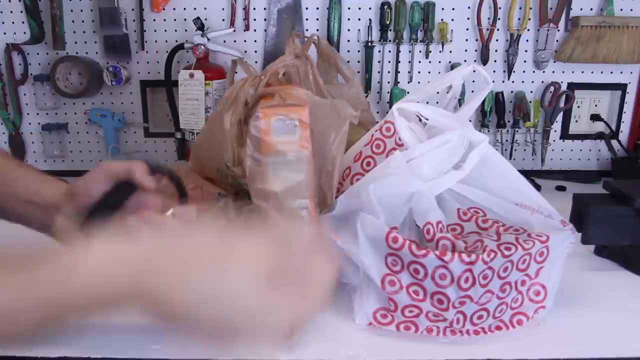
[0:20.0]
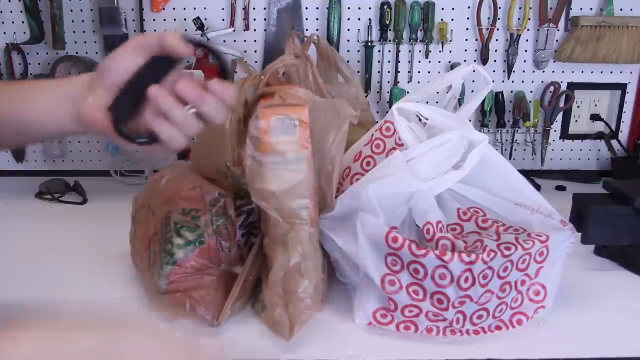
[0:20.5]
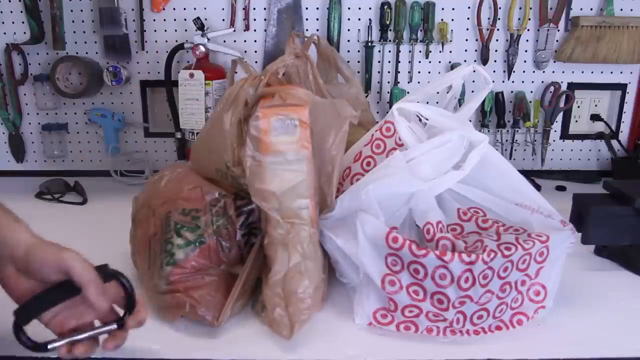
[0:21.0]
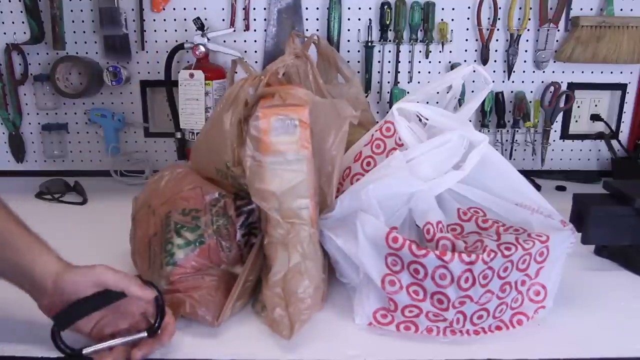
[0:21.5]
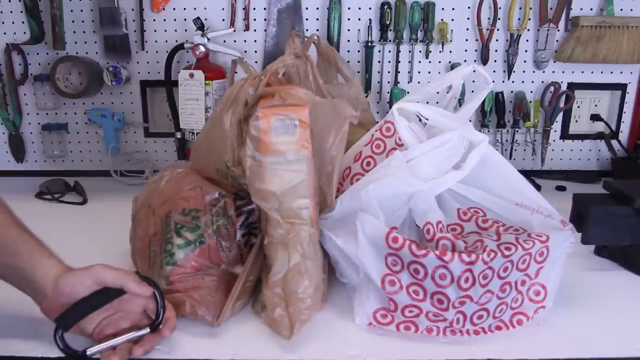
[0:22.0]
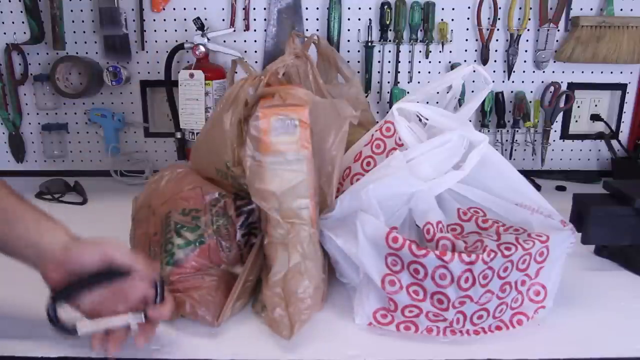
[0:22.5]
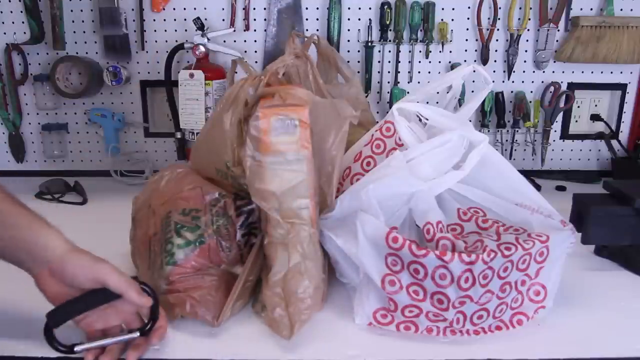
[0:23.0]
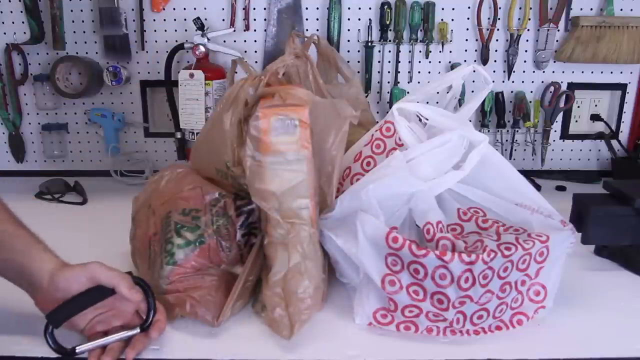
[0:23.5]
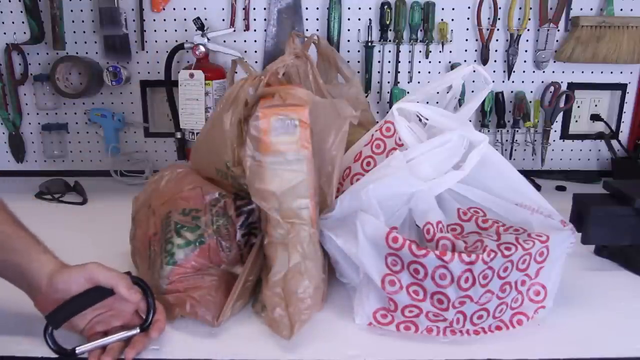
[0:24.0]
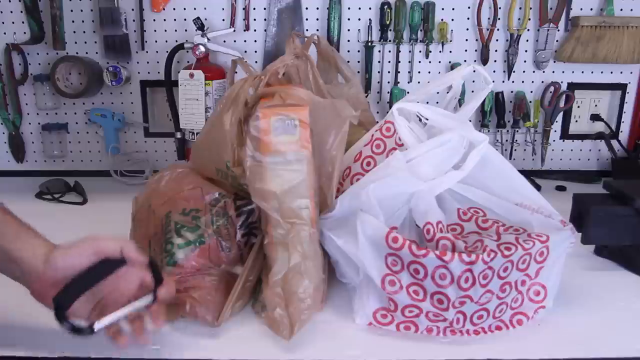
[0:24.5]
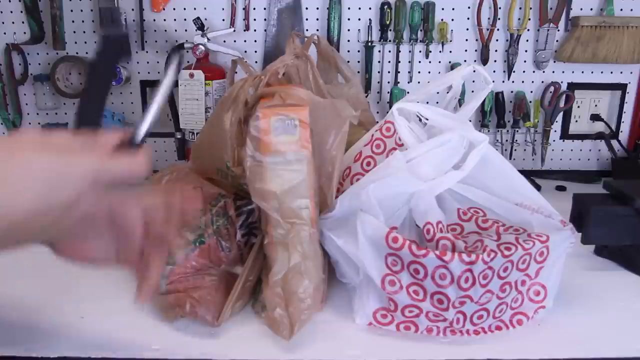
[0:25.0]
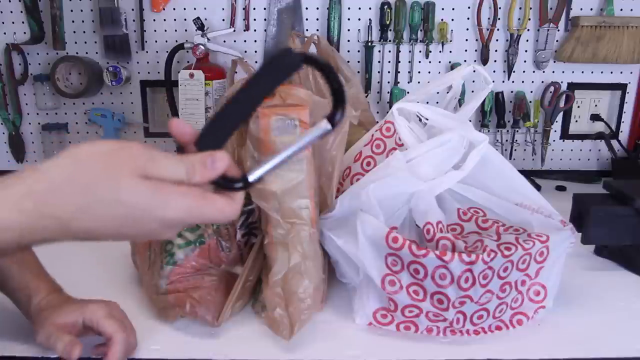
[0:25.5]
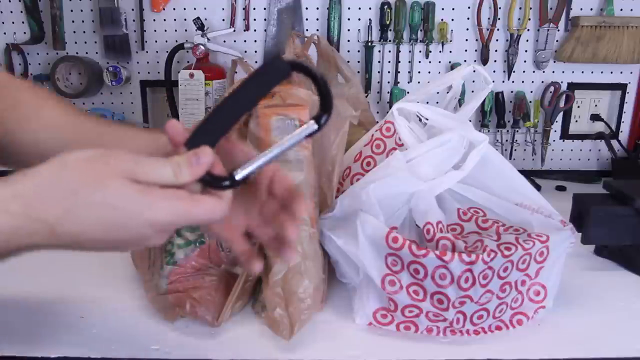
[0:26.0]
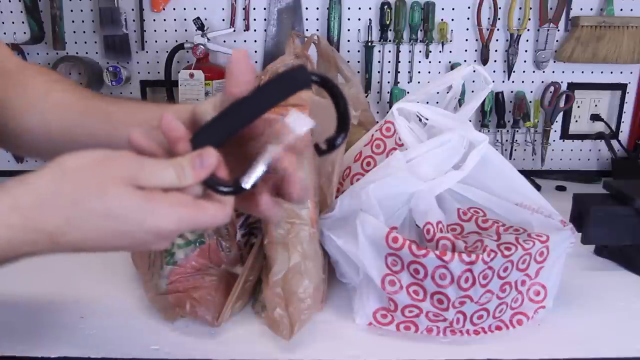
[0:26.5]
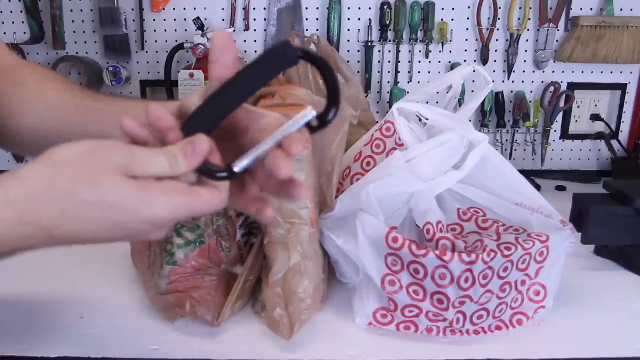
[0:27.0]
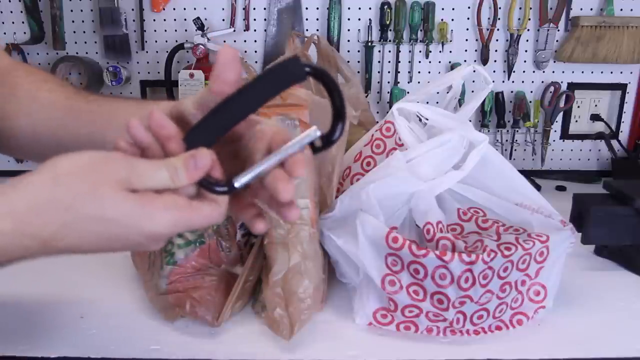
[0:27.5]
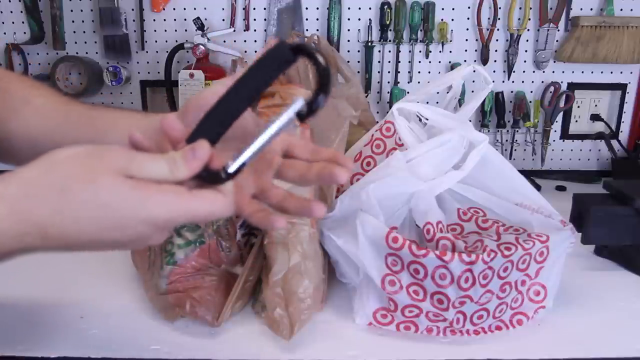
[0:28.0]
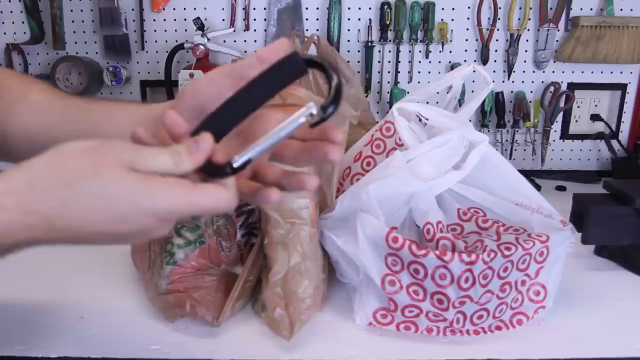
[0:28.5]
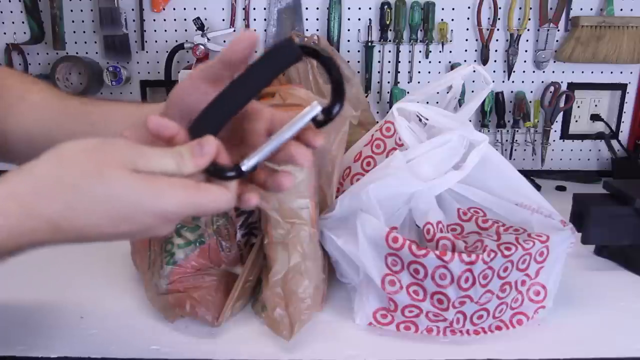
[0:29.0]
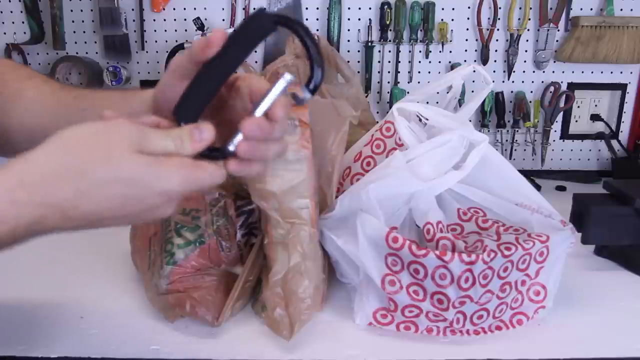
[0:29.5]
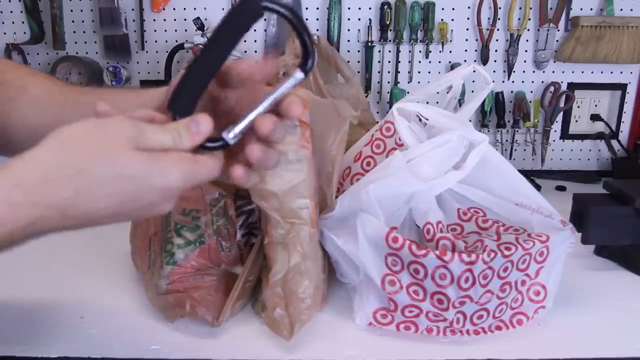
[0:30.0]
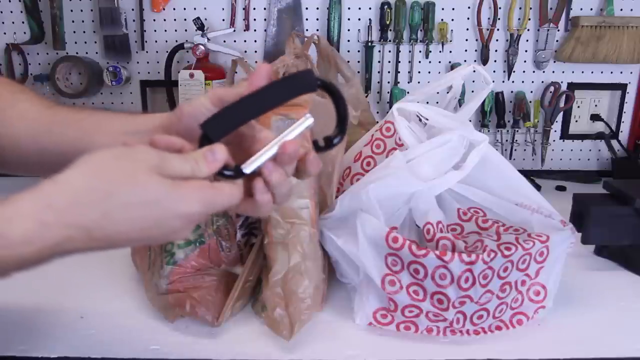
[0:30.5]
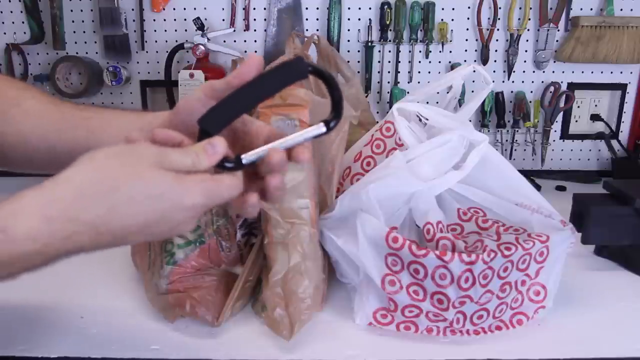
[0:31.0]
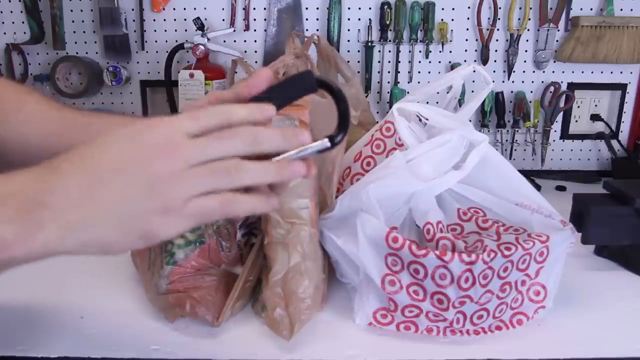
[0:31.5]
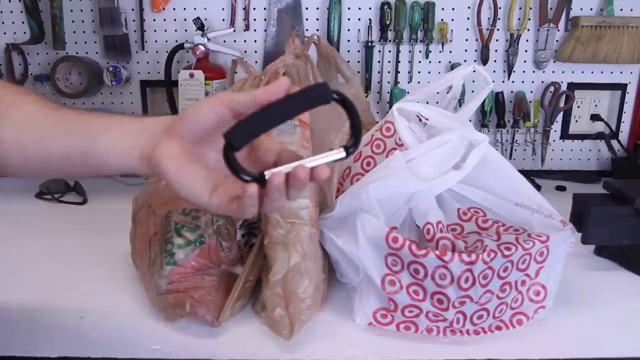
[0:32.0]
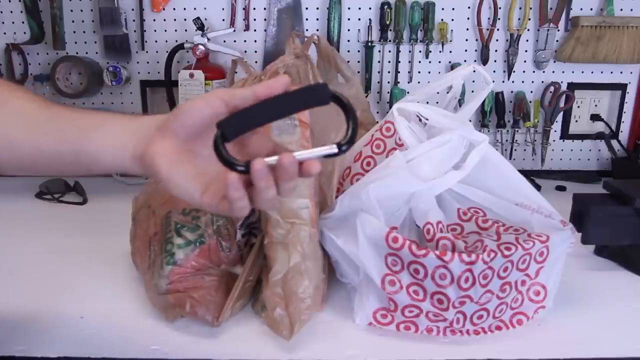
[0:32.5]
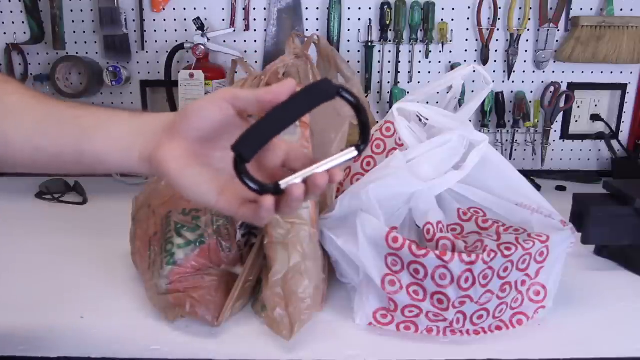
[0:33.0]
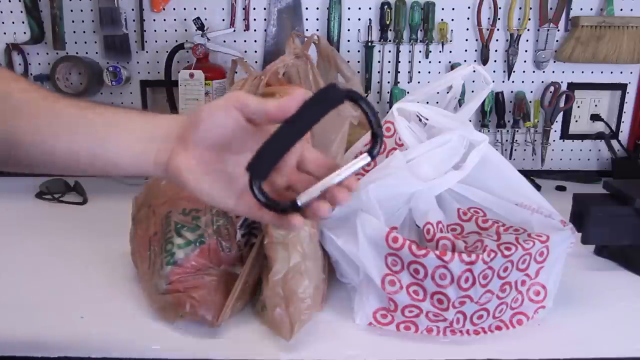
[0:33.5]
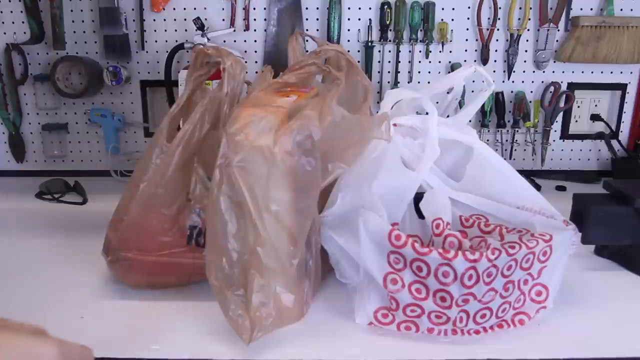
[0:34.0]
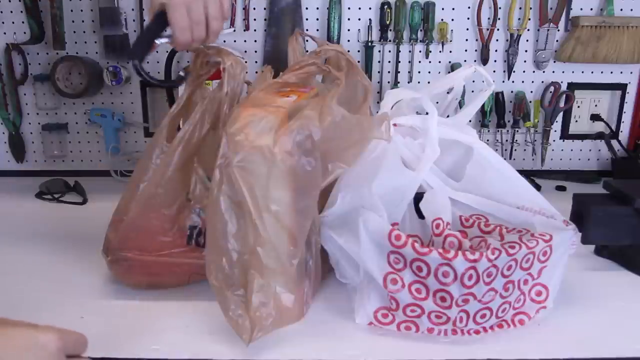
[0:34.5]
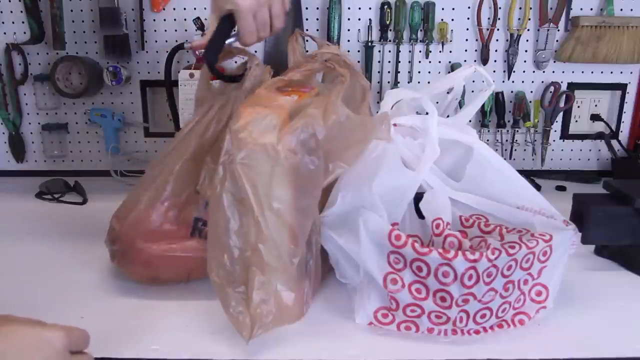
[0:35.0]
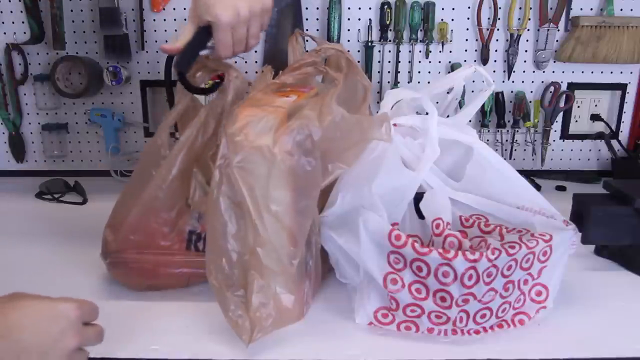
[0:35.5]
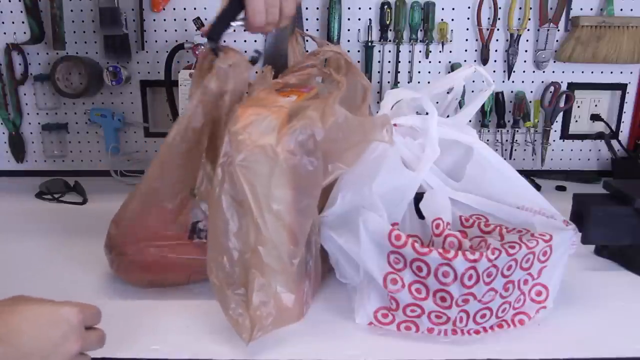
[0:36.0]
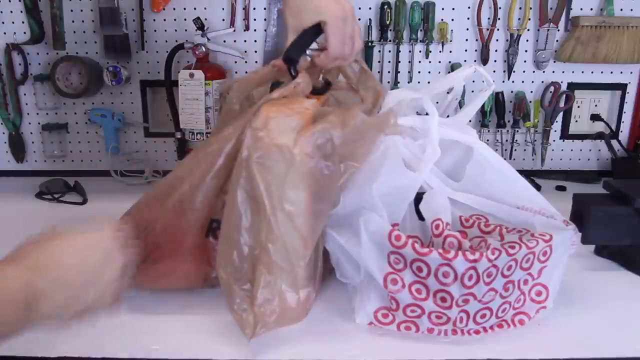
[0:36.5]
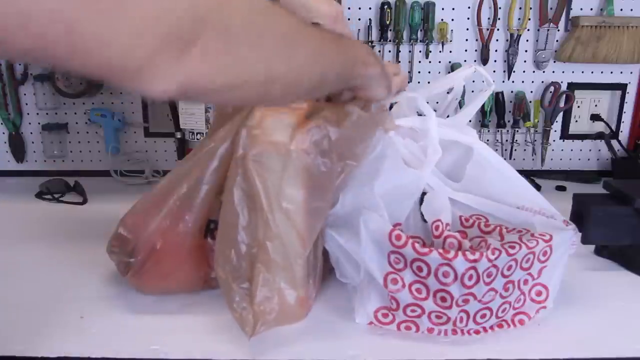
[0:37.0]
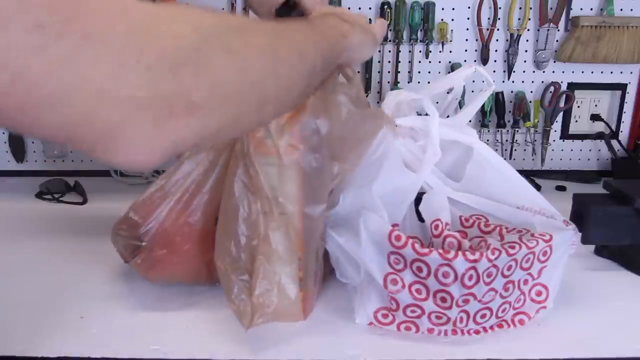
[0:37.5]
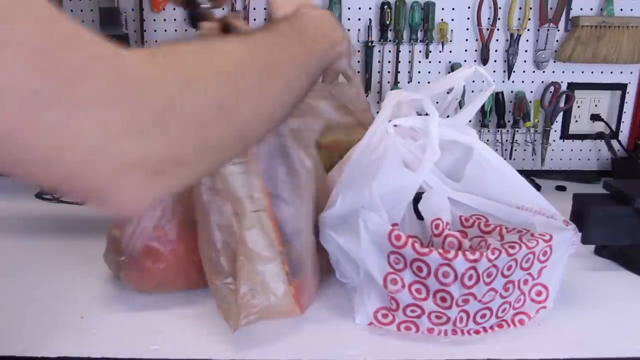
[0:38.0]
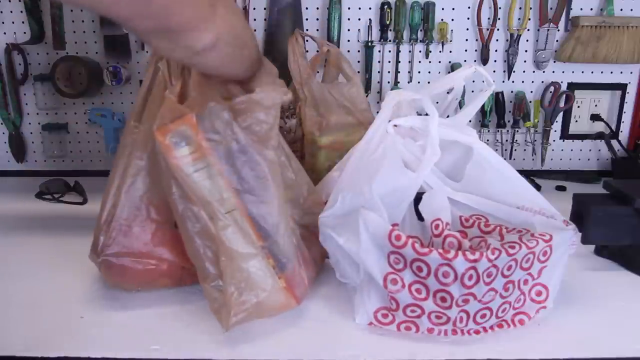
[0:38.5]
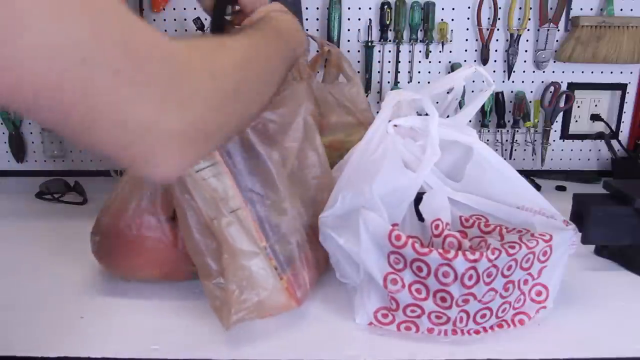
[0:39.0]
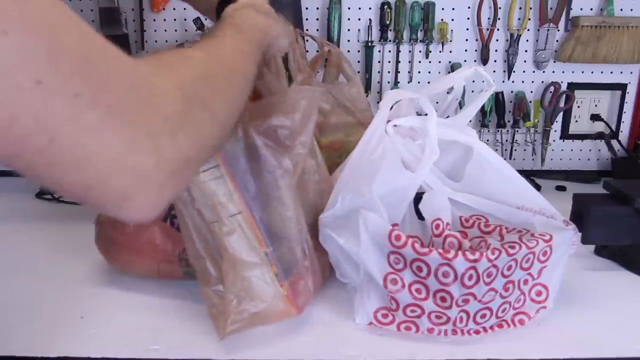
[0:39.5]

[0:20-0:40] A person holds a climber's hook tool and uses it to get hold of the bags, lifting them with it. Inside the brown bags there appears to be a box of cereal, cake mix or crackers. In the background, a variety of tools are suspended on a board: pliers, screwdrivers, a hot glue gun, tape, scissors, a broom or a brush, and a fire extinguisher. A pair of sunglasses is on the table with what looks like a charging cable, and the wall has an outlet with four outlets for plugging in electronics.